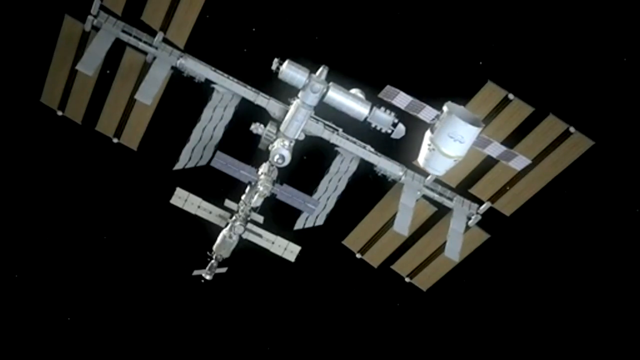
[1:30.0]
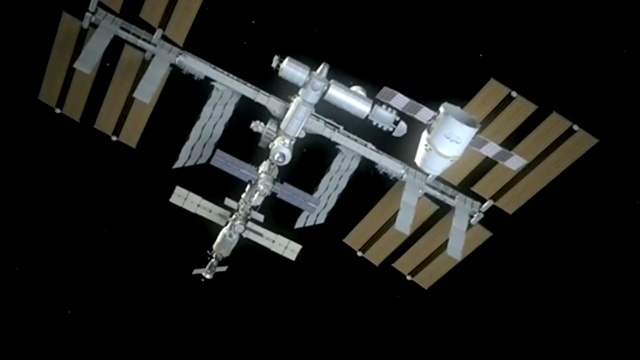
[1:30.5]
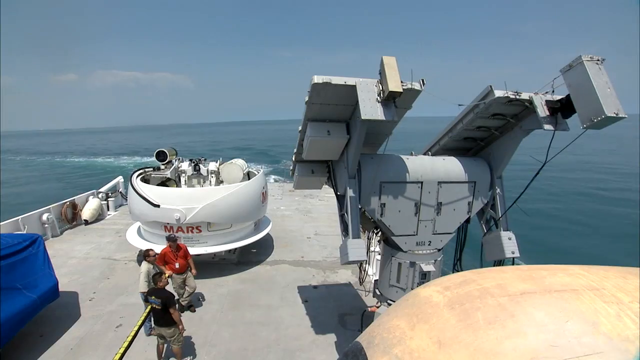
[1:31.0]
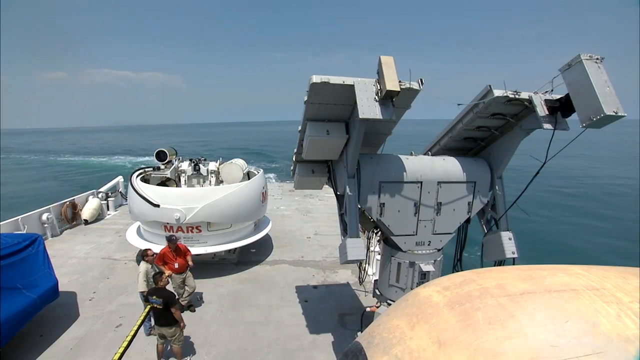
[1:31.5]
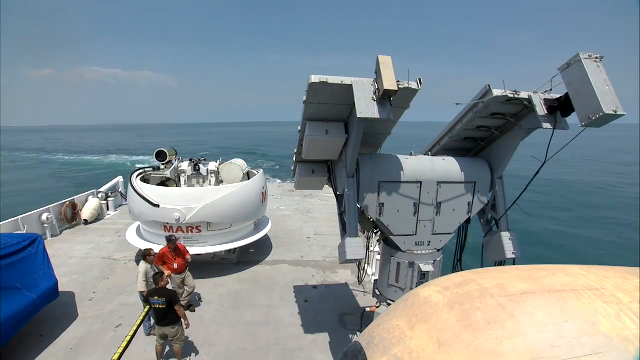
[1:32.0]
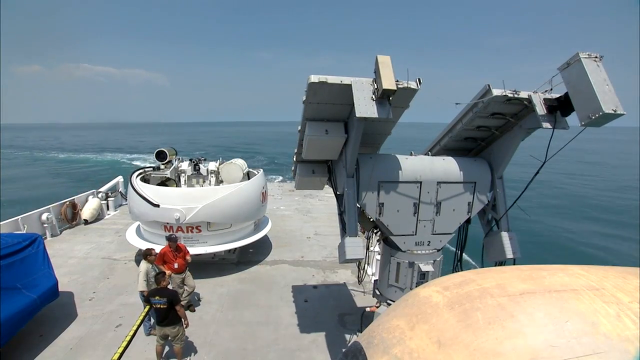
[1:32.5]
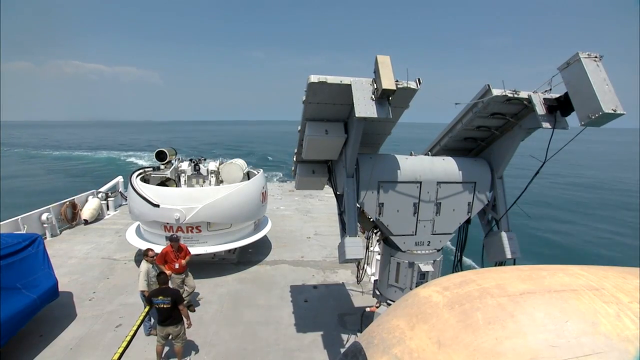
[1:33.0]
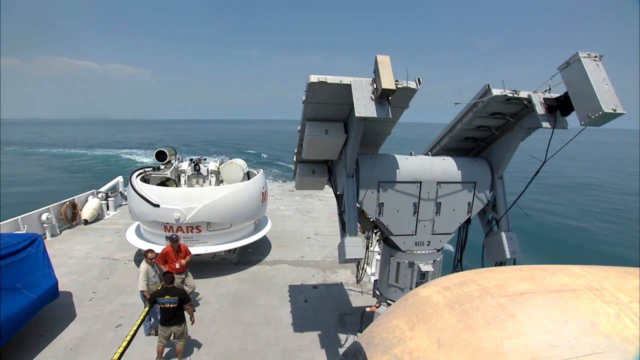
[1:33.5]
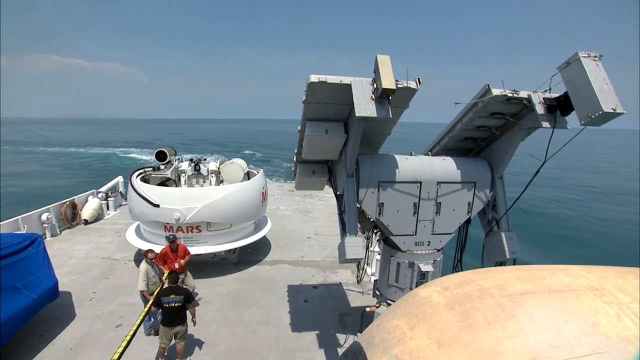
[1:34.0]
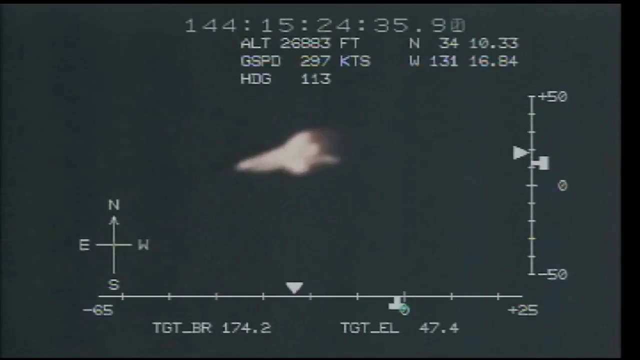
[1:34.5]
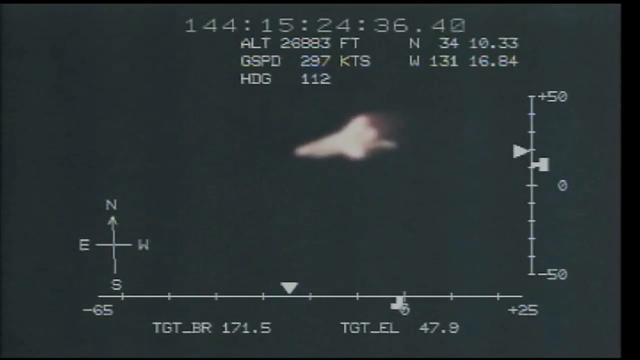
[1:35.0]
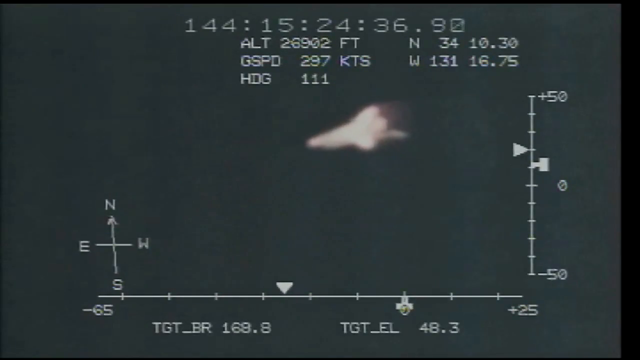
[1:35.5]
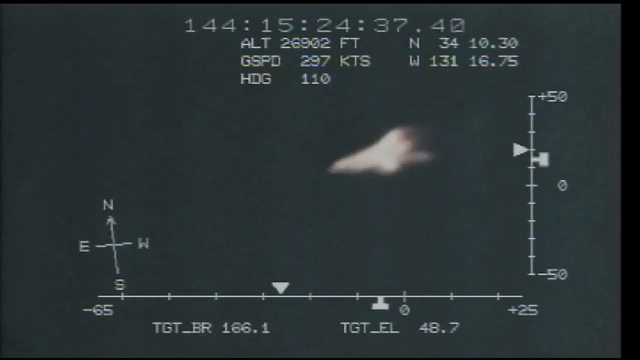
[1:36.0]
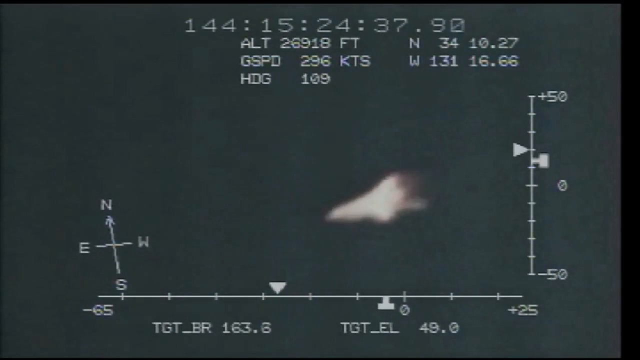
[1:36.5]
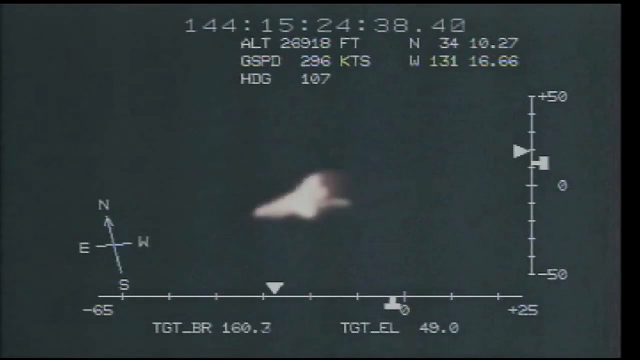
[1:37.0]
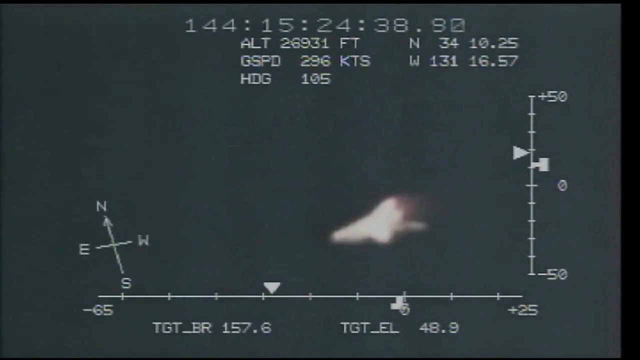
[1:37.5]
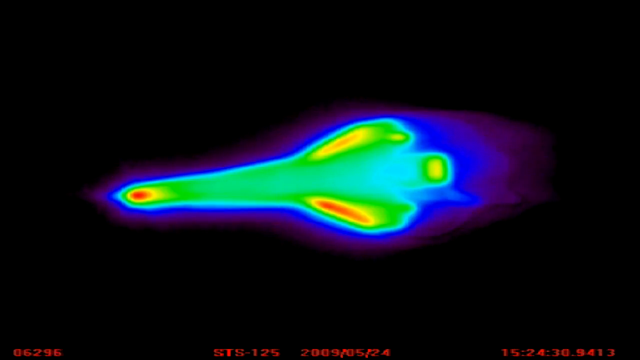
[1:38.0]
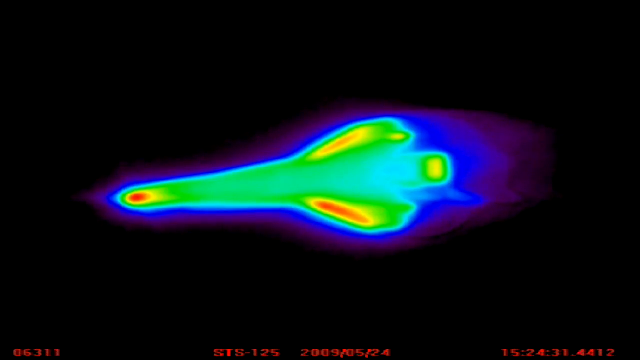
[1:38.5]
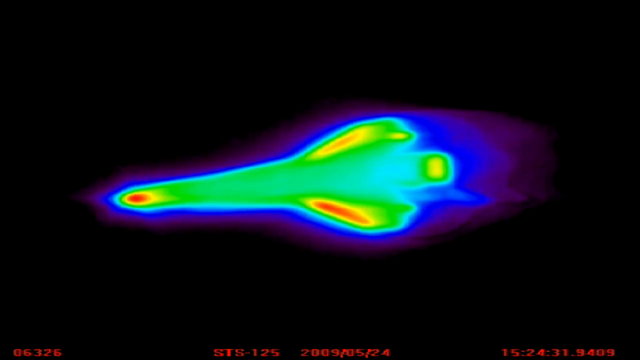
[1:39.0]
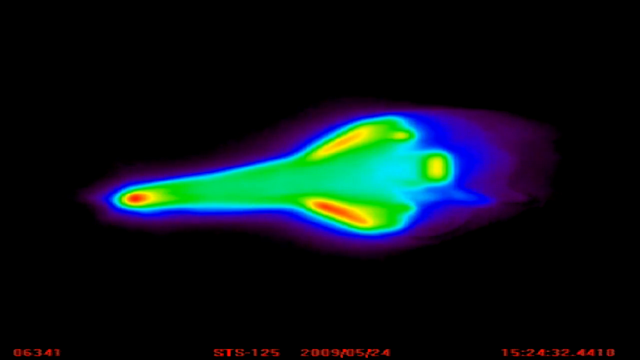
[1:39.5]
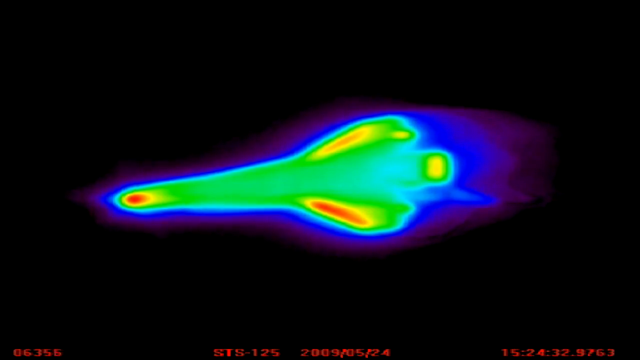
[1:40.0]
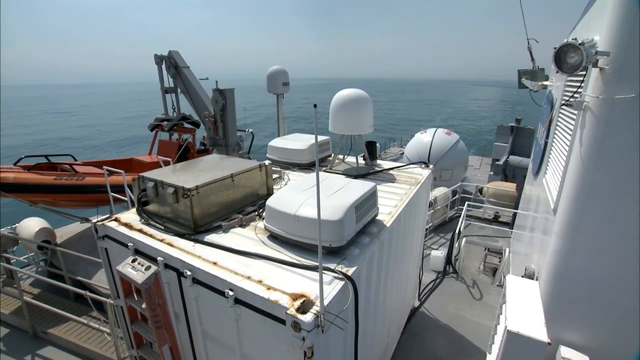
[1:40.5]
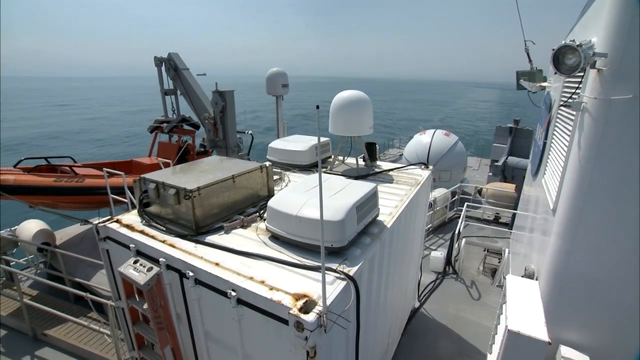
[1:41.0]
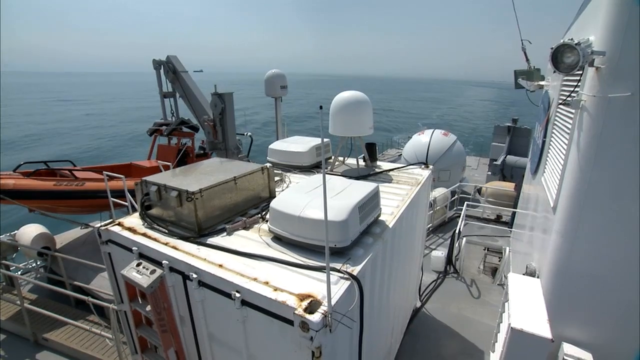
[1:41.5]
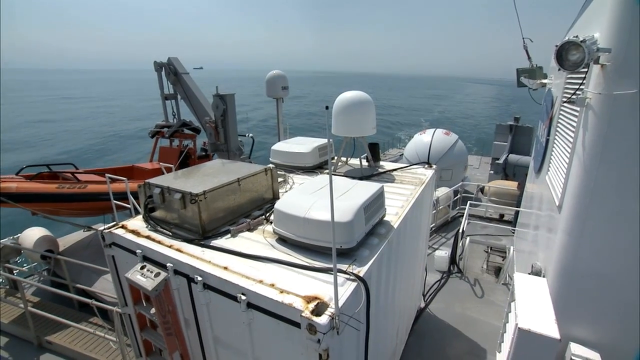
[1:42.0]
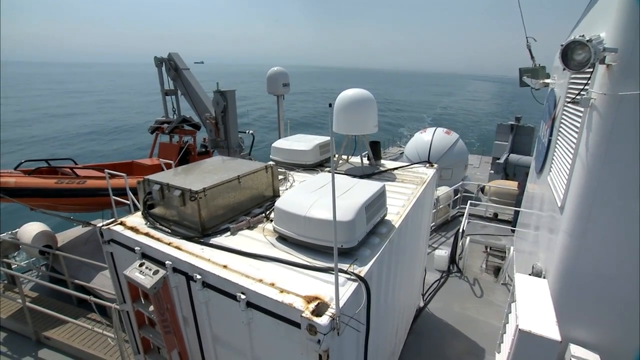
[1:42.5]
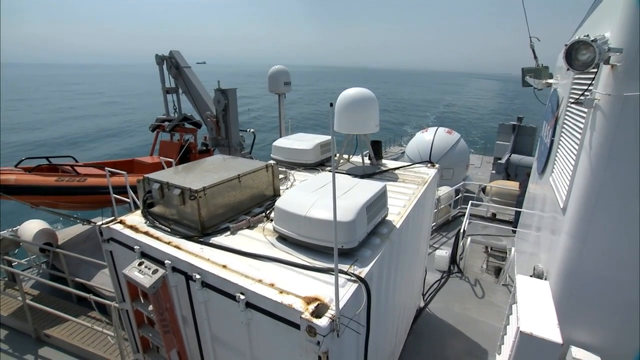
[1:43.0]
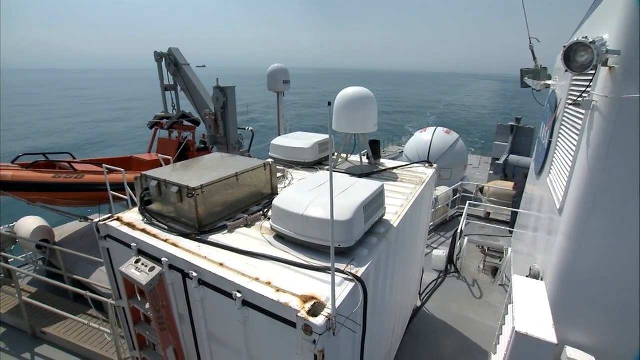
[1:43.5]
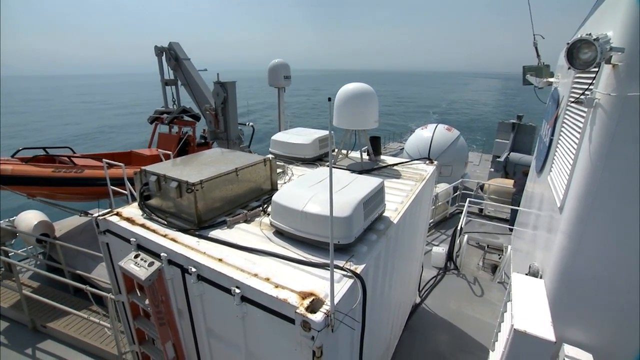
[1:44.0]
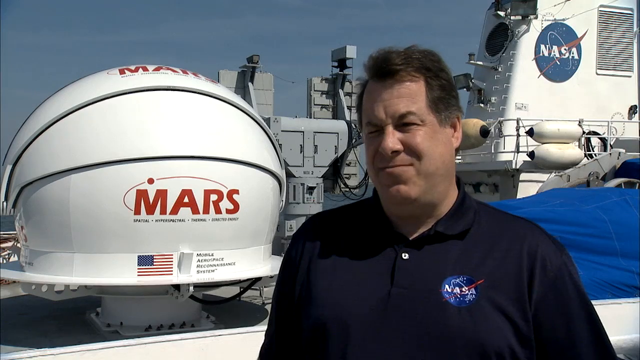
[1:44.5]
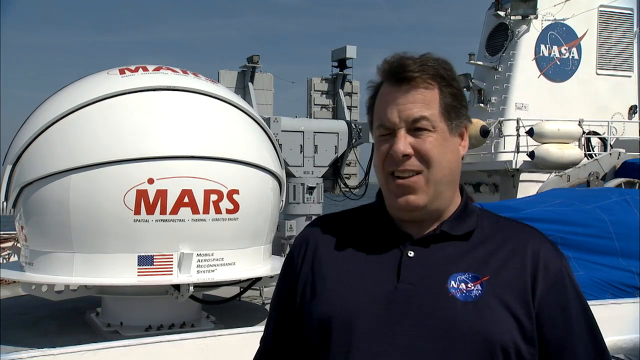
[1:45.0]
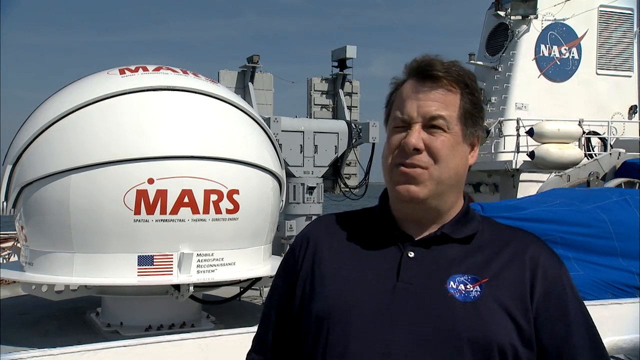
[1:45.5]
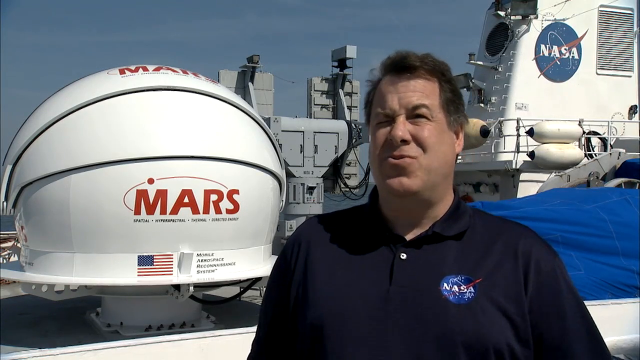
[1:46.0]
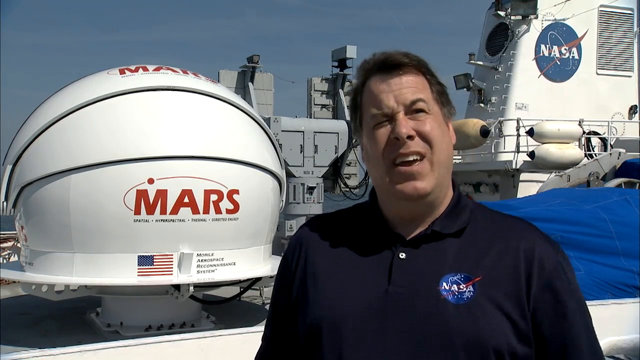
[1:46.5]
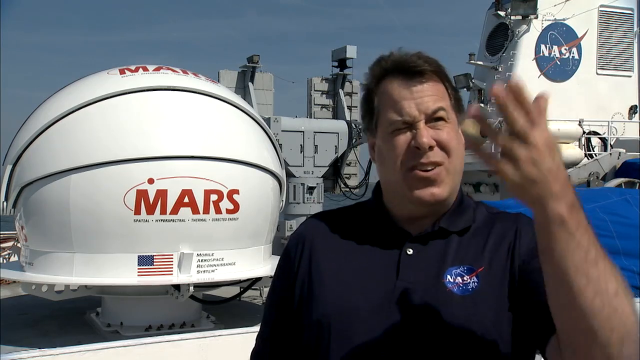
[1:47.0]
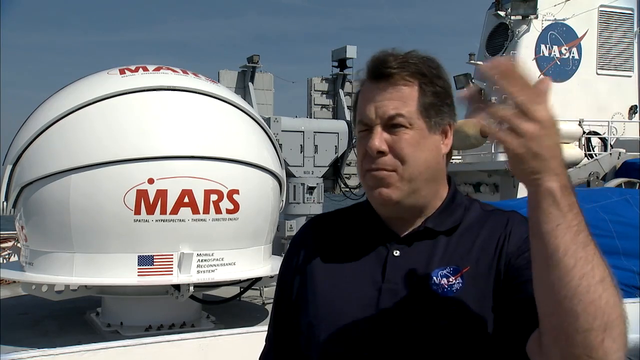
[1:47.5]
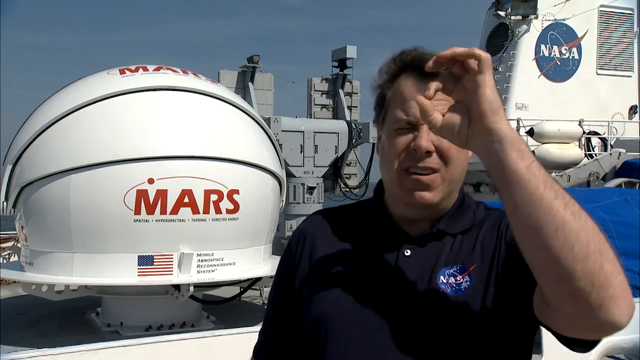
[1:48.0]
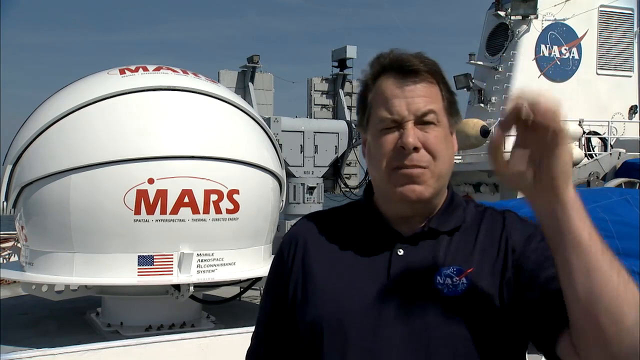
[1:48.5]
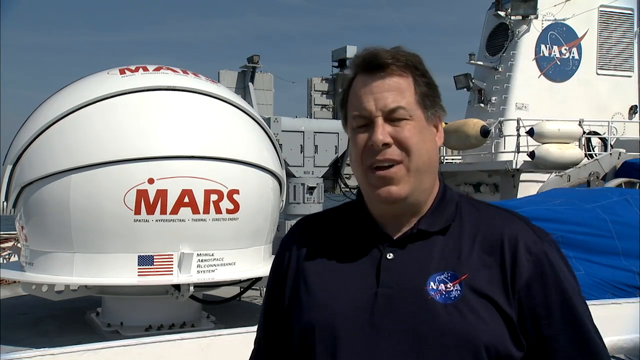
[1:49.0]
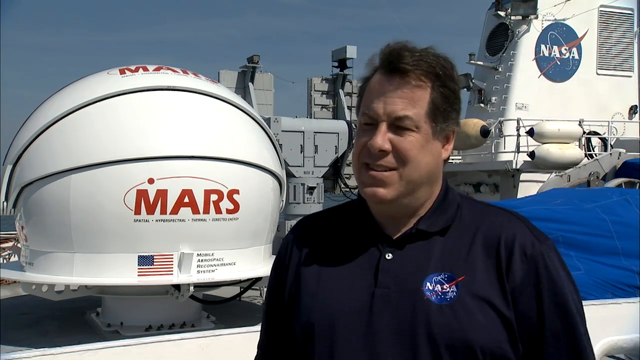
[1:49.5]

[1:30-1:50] The graphic shows something that looks like a satellite floating on a black background, with a little capsule that seems to be coming towards it. The view returns to the ship's deck with the open dome and the large plates that look like a little radar thing that was rotating. Three men are on the deck, seen from above as if from one of the ship's towers; they wear black, tan and red shirts, each a different color. Next is a view that looks like a computer screen, with a line with notches along the bottom, a vertical line with notches, and a compass with northeast and southwest in the lower left; it has kind of a 1980s or 90s look, with numbers and words at the top and an illuminated, blurry shape that looks like a rocket coming across the screen. Then, on an all-black background, the same blurry rocket-like shape appears in very bright colors: bright green with a little red and yellow, outlined in vibrant blue and again in vibrant purple, in the shape of a spaceship heading left. Another view of the deck from a bit higher up shows the dome and the equipment, and a red and orange lifeboat on a little elevated area in the same space. Finally the man in the dark blue polo is talking next to the white sphere; he gestures with his left hand, putting his fingers up towards the sky and then clenching them together a little.